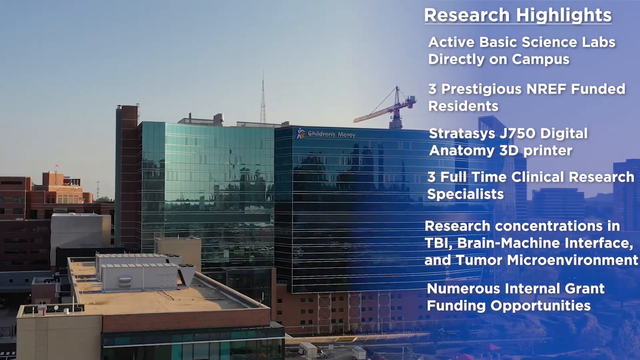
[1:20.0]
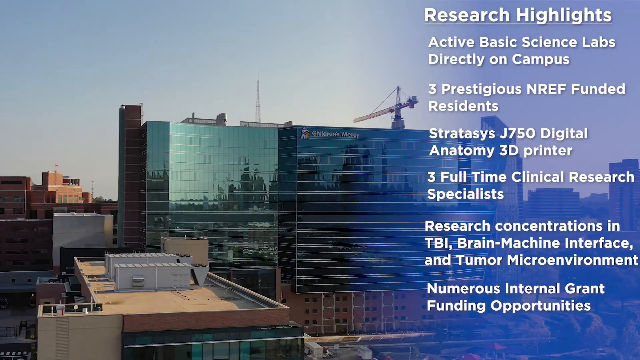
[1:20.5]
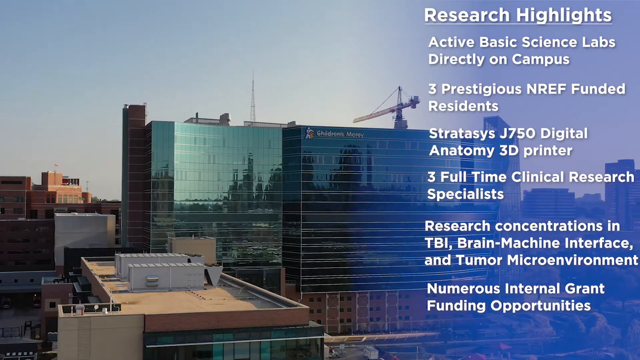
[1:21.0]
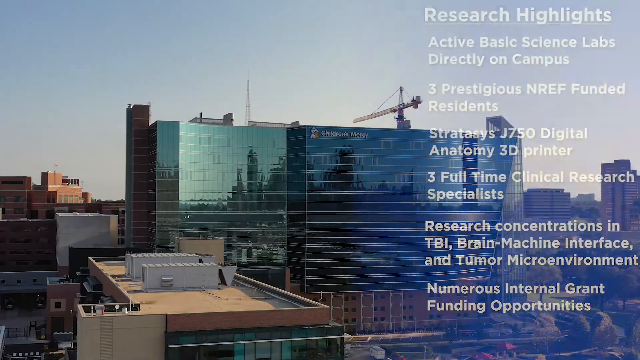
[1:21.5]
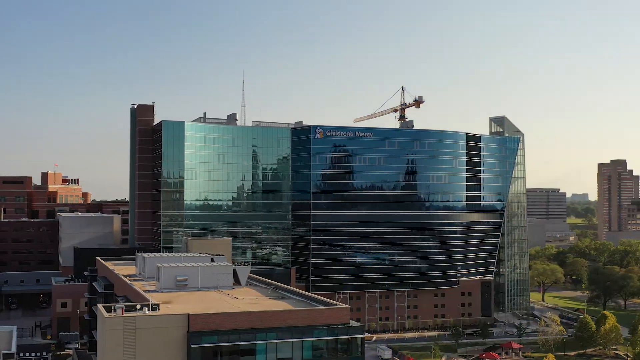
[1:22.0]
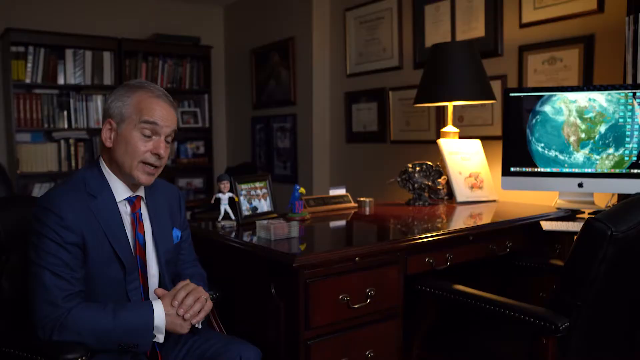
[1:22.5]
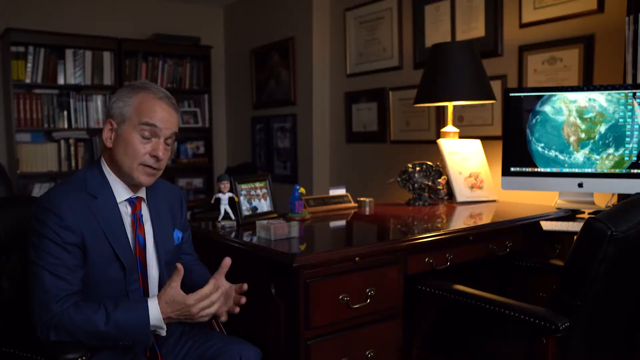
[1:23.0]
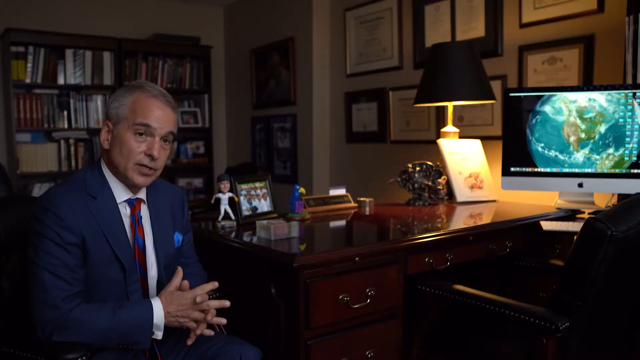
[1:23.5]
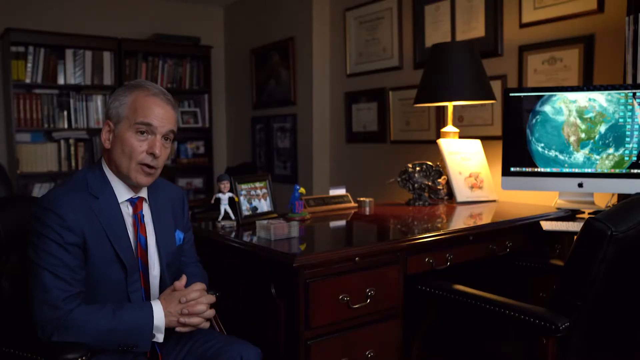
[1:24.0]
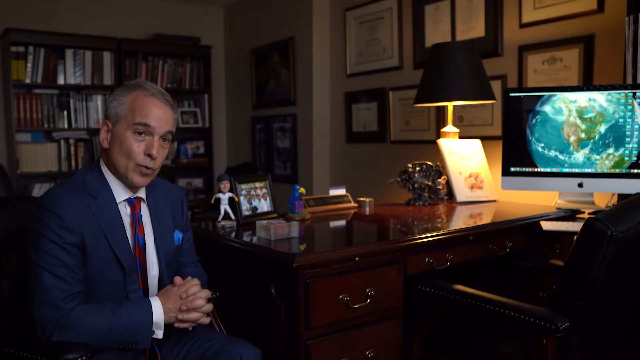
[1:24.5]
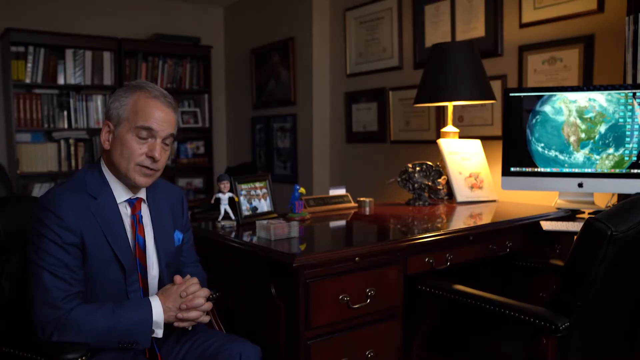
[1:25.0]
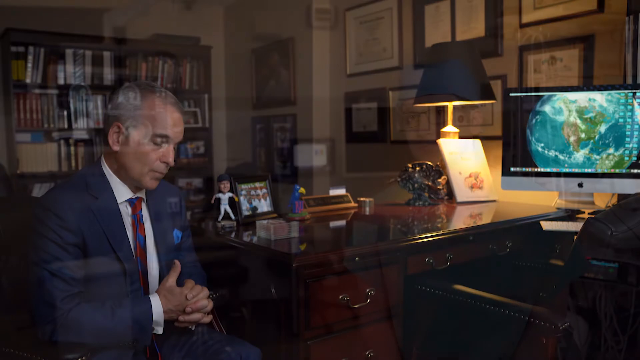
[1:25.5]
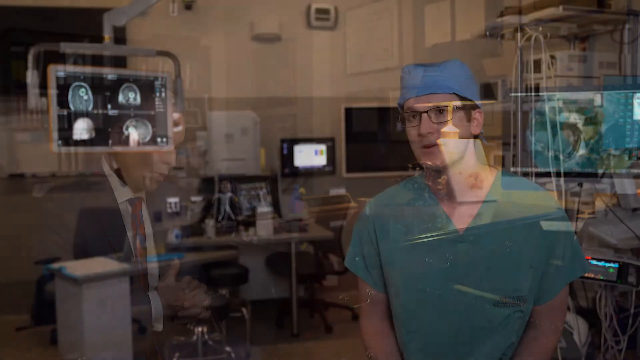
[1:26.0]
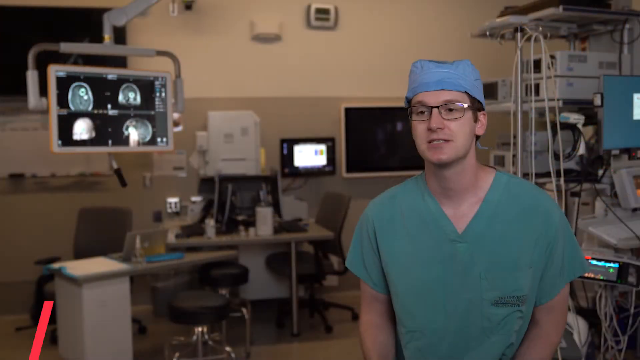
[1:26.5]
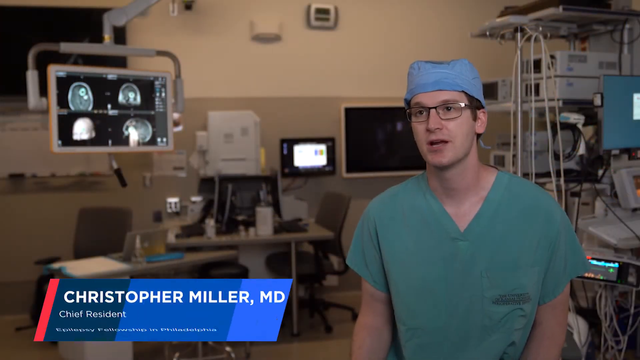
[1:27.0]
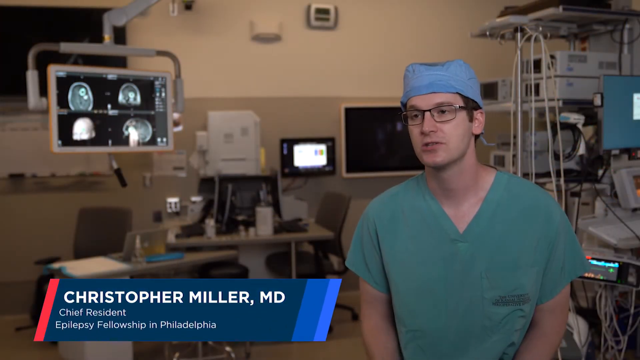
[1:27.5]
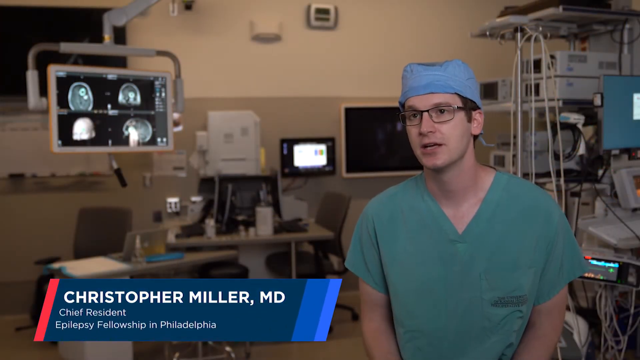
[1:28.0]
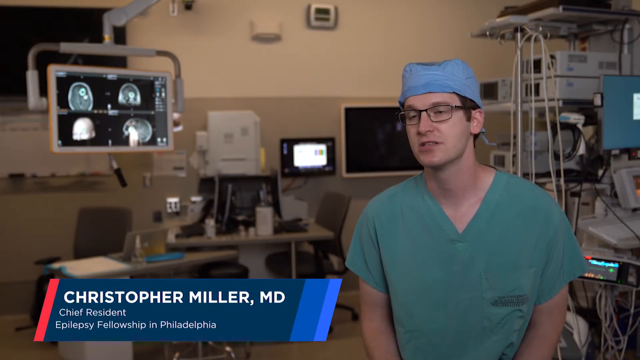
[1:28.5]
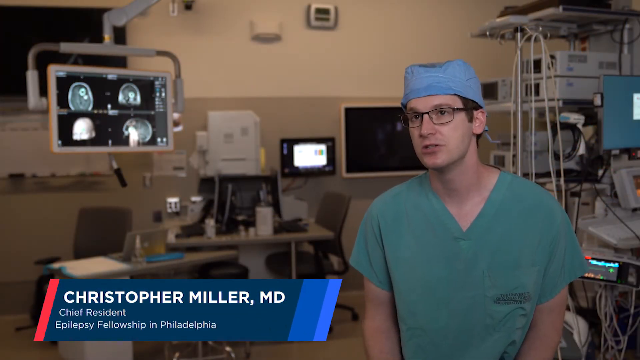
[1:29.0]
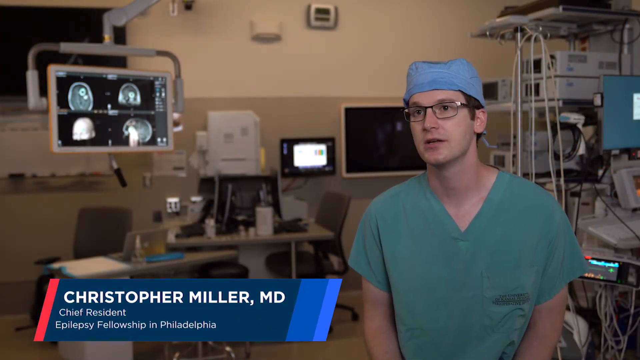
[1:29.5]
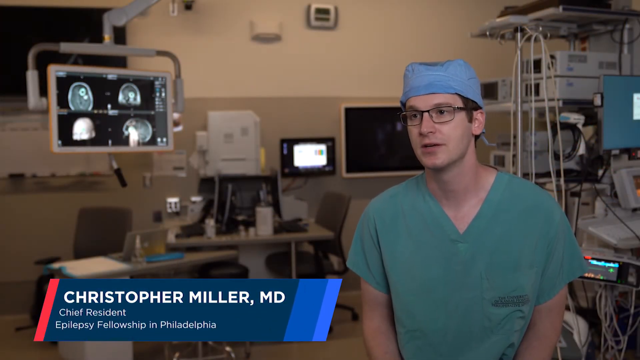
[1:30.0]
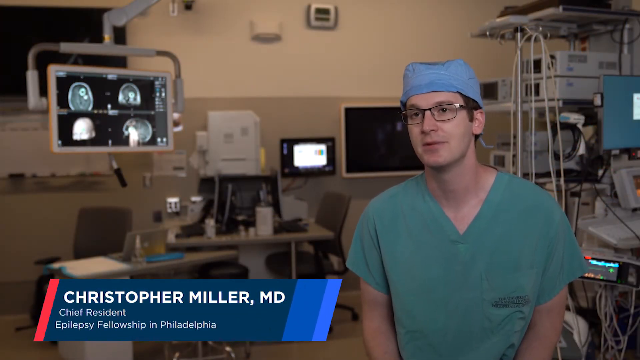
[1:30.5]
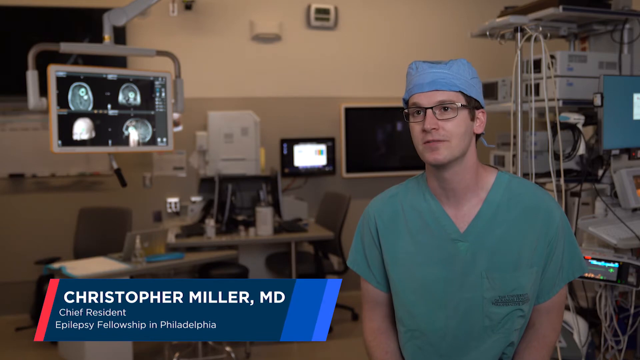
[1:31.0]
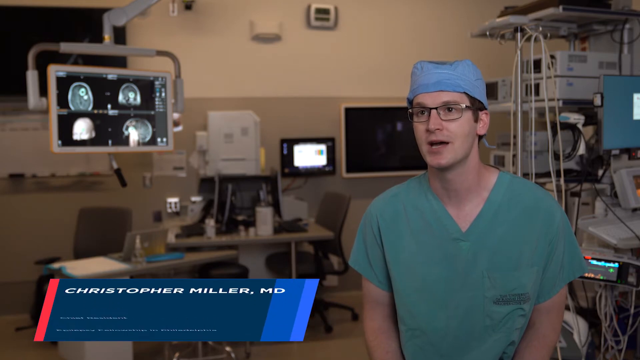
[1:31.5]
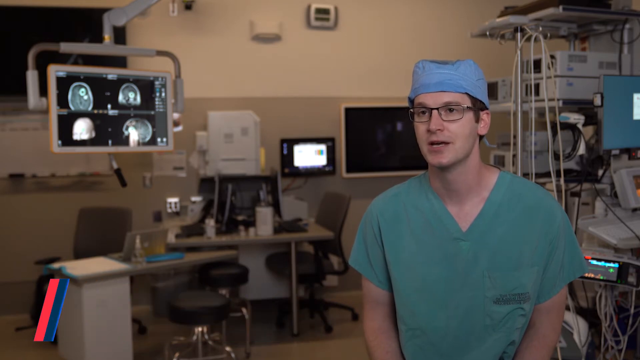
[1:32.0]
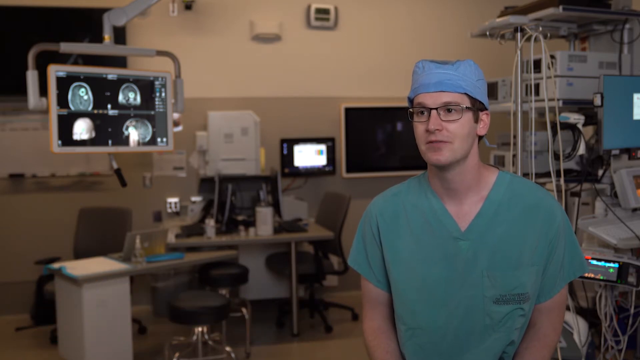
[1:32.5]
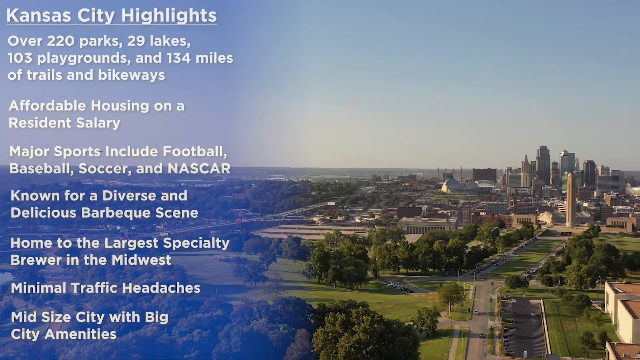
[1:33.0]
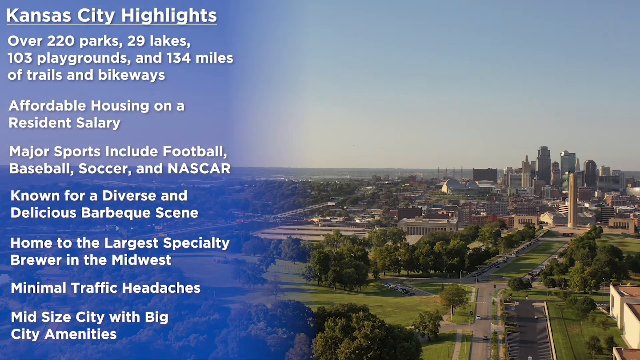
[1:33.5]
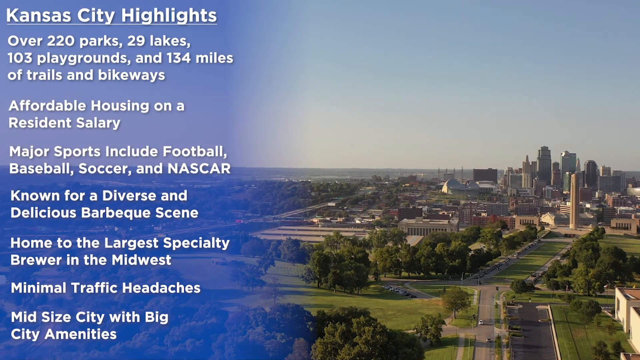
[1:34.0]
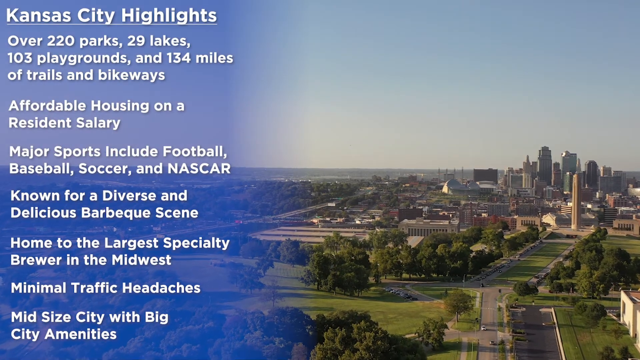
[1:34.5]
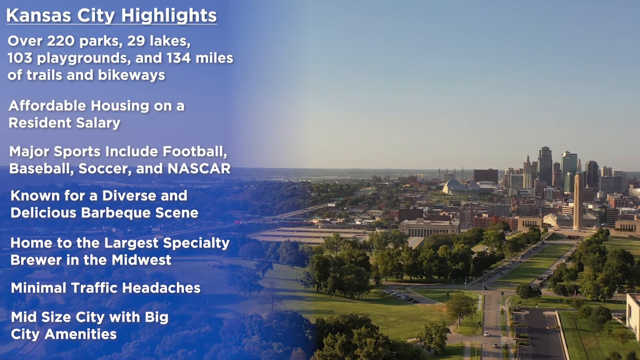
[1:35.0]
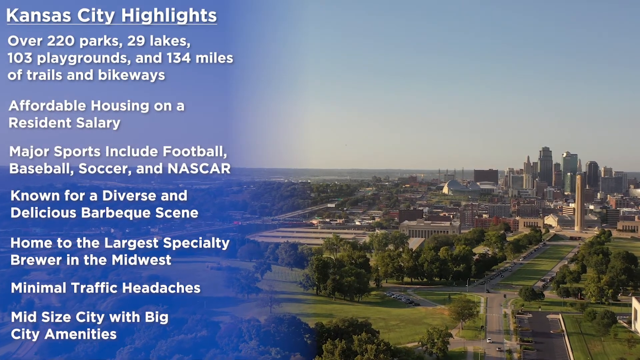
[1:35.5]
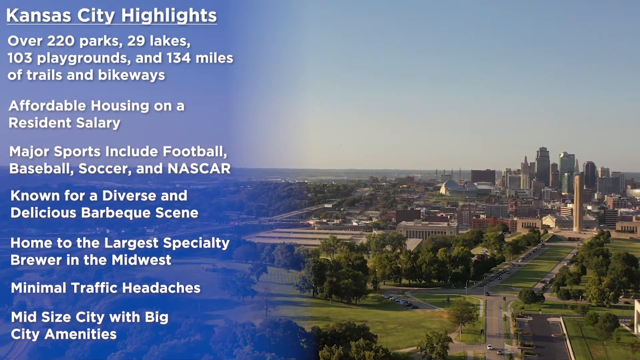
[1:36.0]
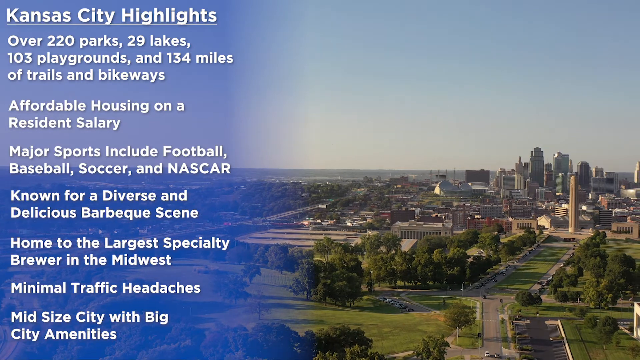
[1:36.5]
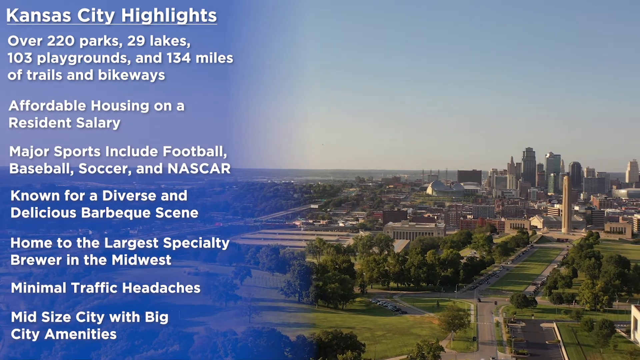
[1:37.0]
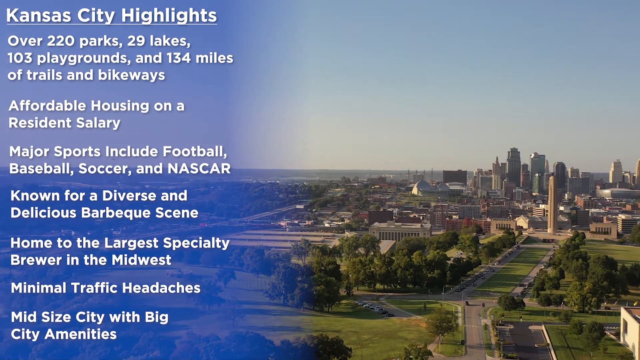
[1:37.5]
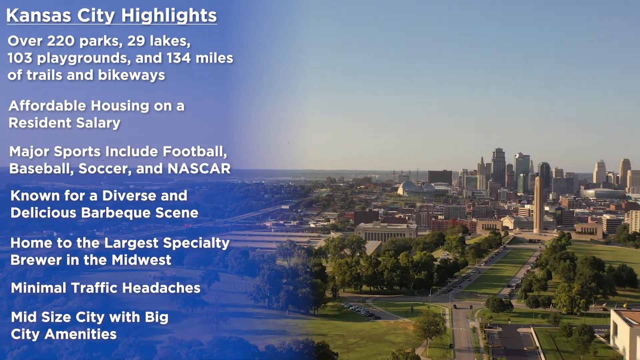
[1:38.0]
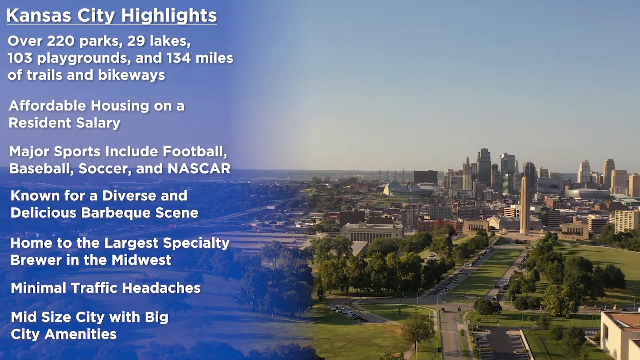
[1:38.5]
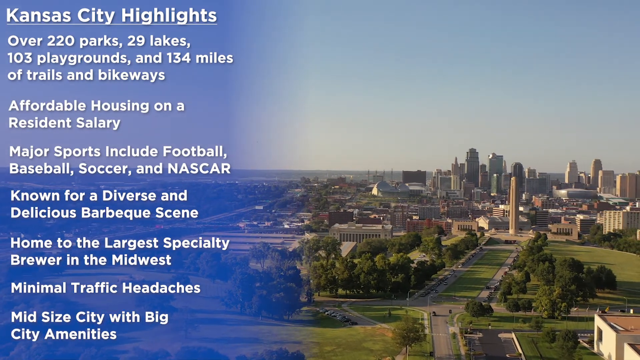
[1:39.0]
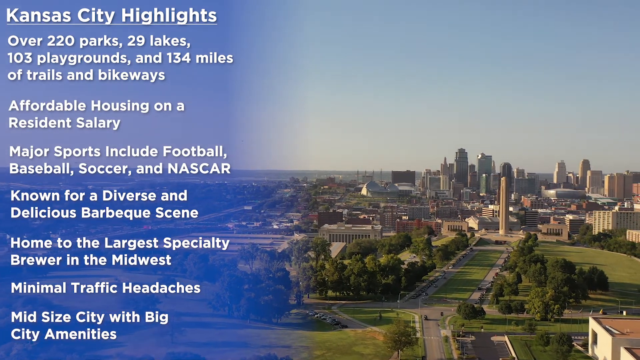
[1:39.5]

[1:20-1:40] White bold text on the right side reads "Research Highlights". Behind it are aerial shots focusing on the large building against a bluish sky in daytime. The building has very reflective windows, kind of greenish, reflecting the city out of view. The camera continues to slowly glide to the left. The scene changes to a man sitting at the bottom left in a blue suit jacket, white shirt and red and blue tie, his hands near his belly as he intertwines them in front of him. The scene changes to a different man on the right side, a white man with black glasses, a green doctor's shirt and a very light blue doctor's hat. On the left side his name appears, "Christopher Miller", along with "MD". He is apparently in a doctor's sort of operating setting, sitting and talking, making slight head movements as he talks to someone to the left of the camera. The scene changes to an aerial shot of a city. On the left side, white text reads "Kansas City Highlights", followed by highlights such as major sports, "known for a diverse and delicious barbecue scene" and "affordable housing on a resident's salary". The camera sort of slowly zooms forward over the city landscape, with a number of green trees and large buildings in the background.